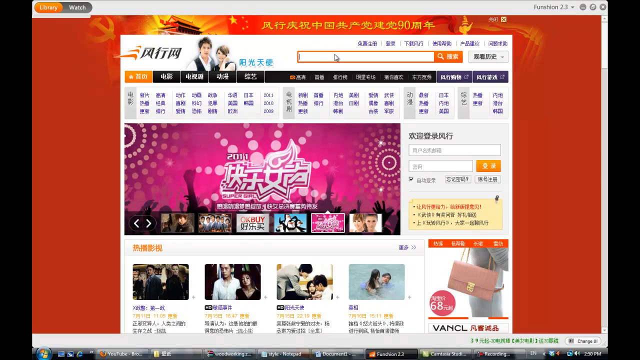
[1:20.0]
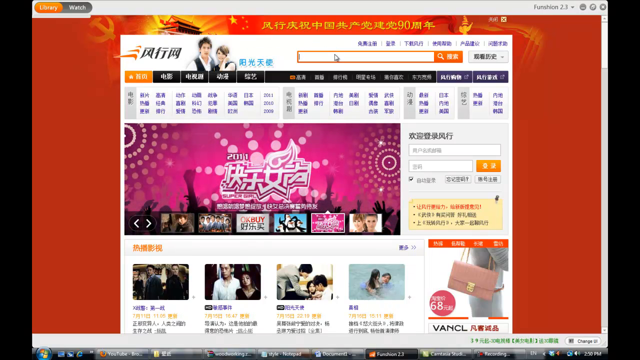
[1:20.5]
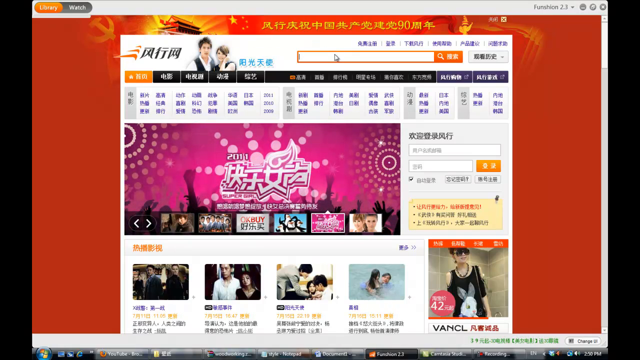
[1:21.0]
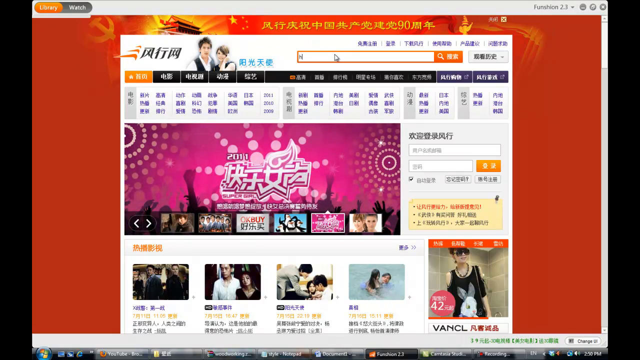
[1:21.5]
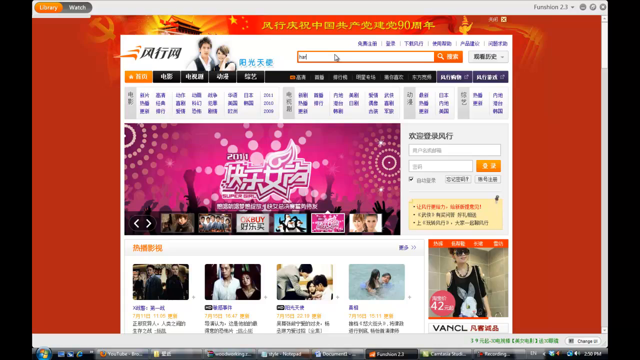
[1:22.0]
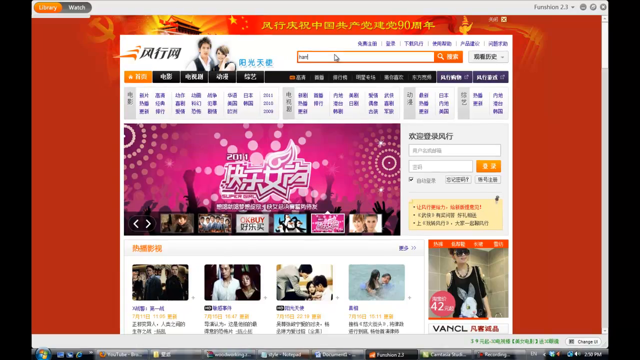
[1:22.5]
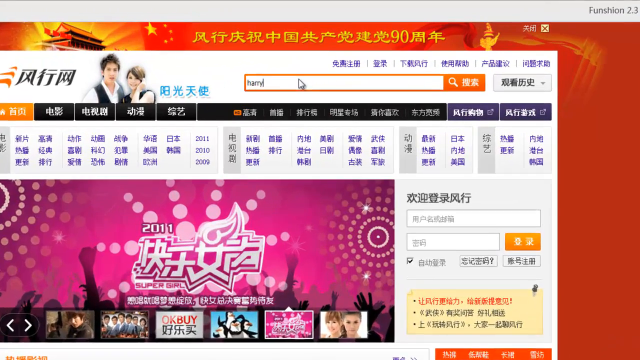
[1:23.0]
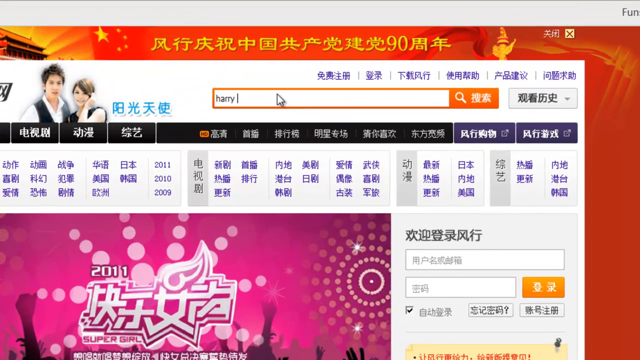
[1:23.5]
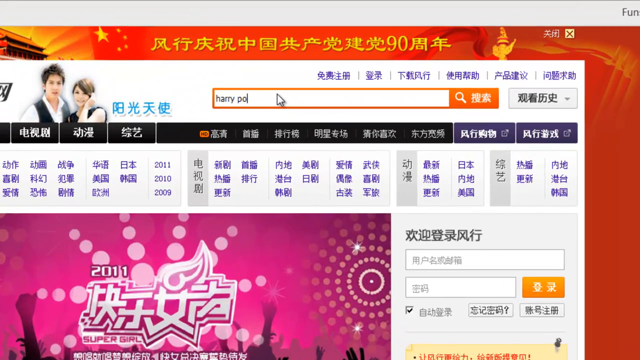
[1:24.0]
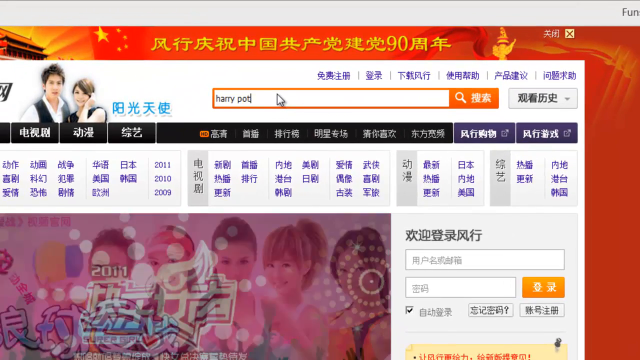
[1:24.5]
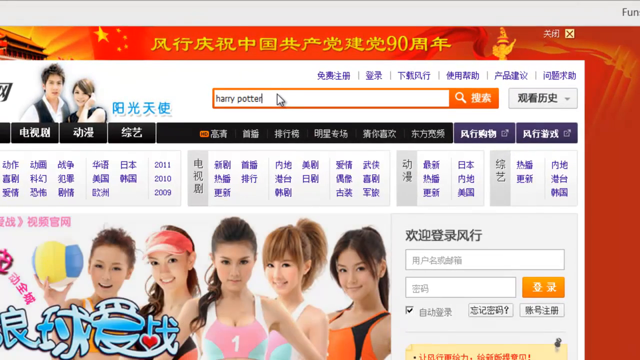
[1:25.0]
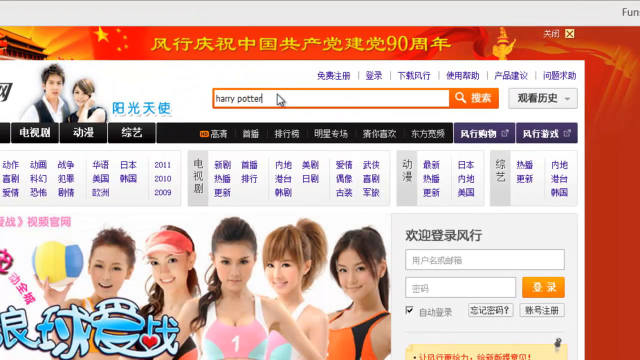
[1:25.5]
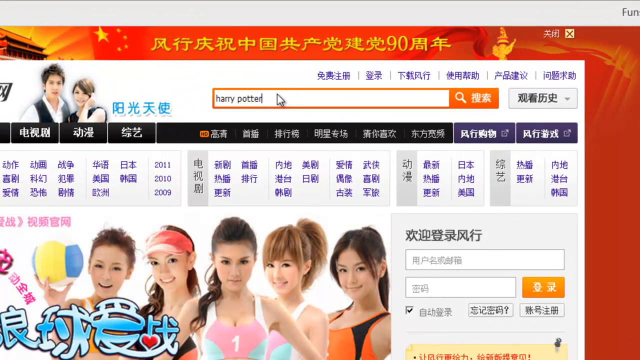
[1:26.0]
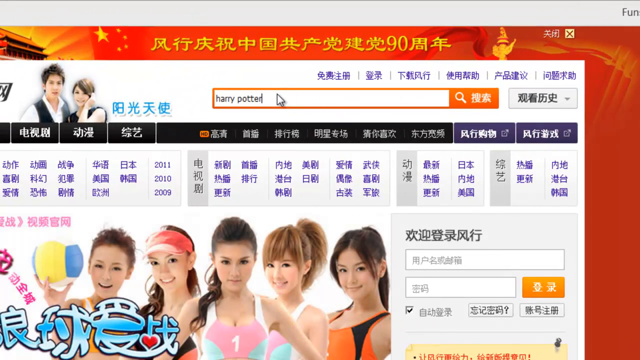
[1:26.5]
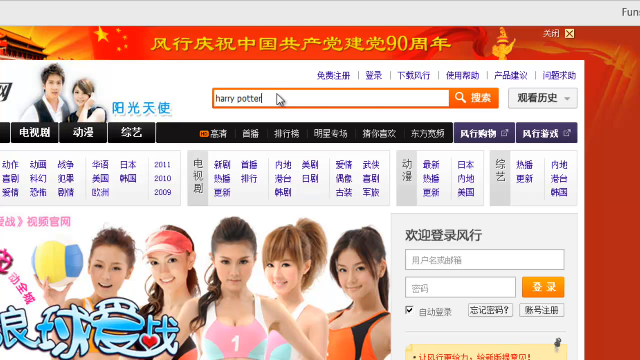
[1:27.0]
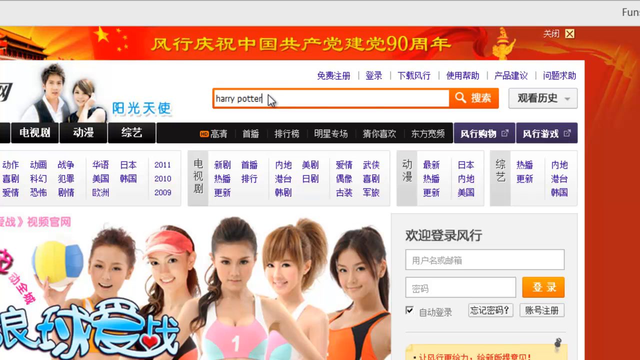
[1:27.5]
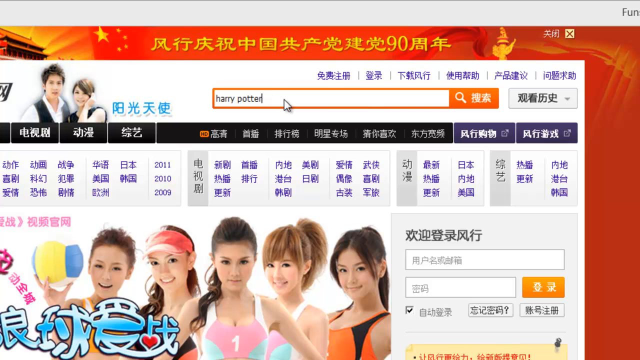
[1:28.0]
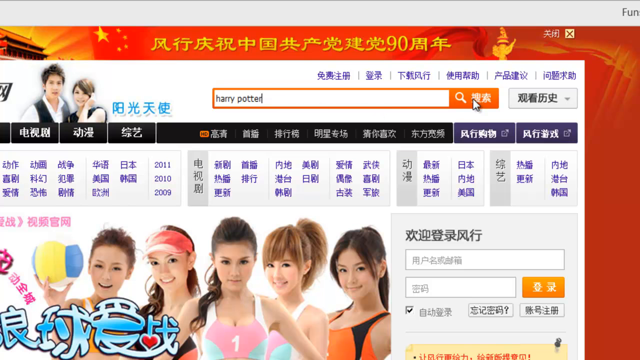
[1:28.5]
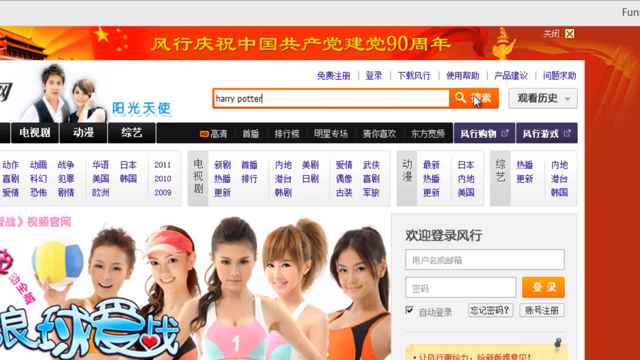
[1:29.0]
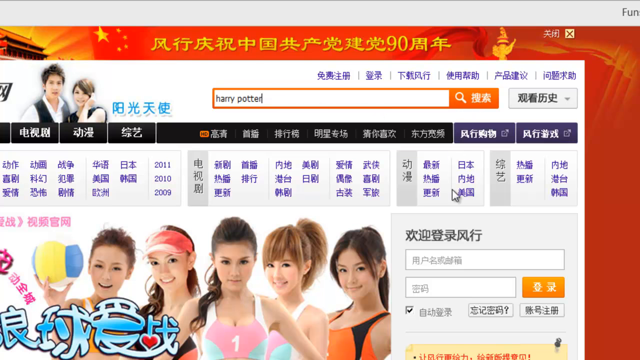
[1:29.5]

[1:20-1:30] The user types "Harry Potter" into an orange search bar at the top right of the website. A library/watch toggle button is in the top left corner, functions for customizing the view of downloads are in the top right corner, and the bottom of the website shows a log of the download history.